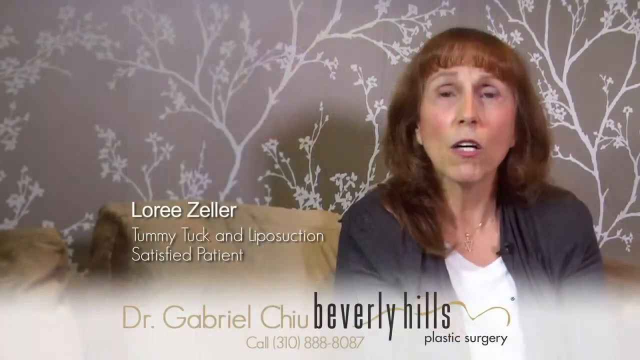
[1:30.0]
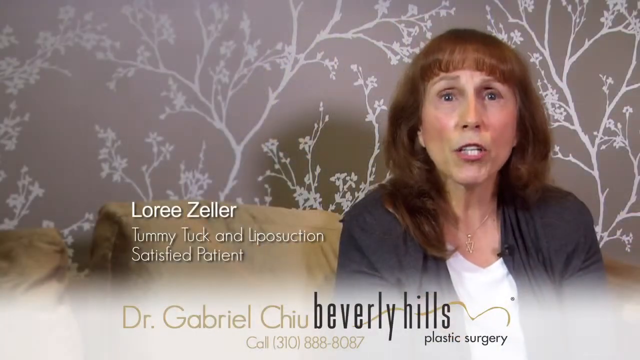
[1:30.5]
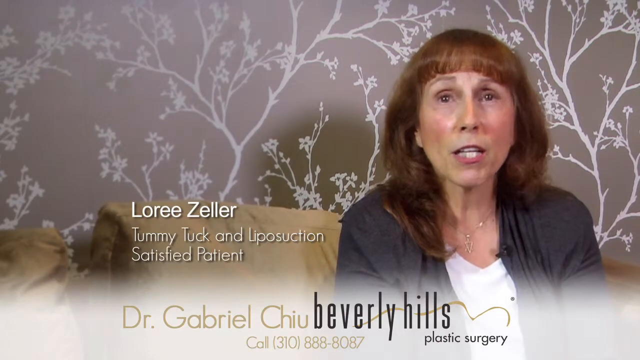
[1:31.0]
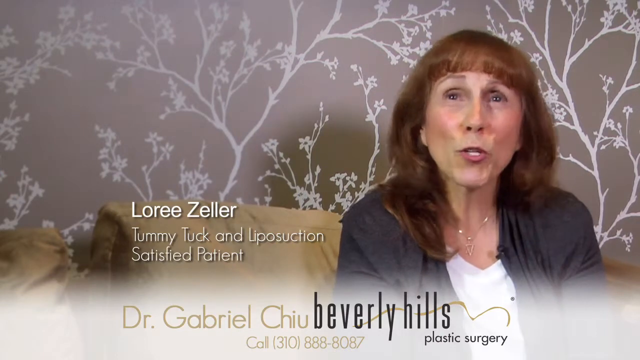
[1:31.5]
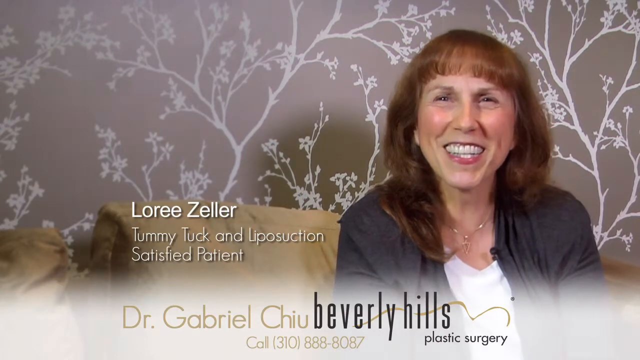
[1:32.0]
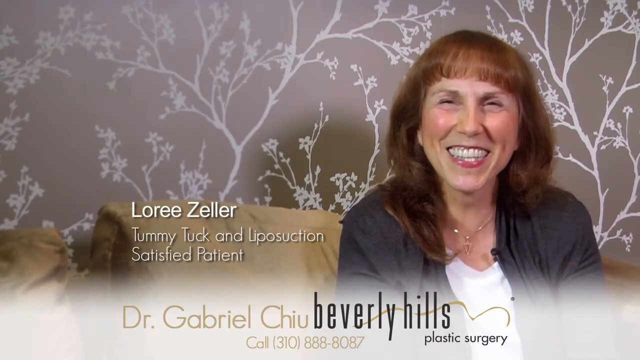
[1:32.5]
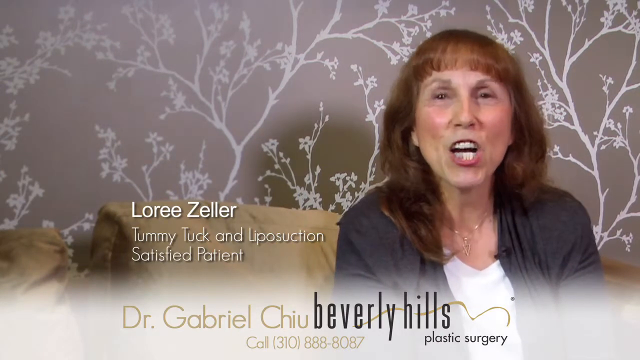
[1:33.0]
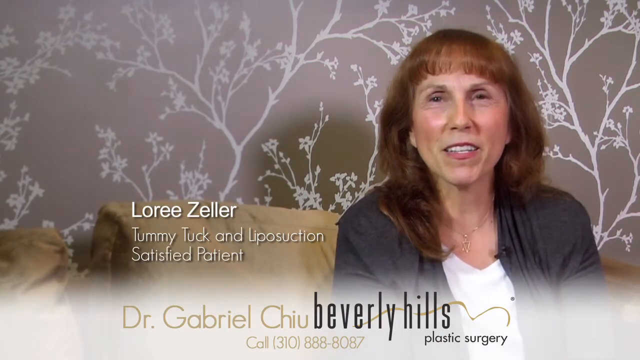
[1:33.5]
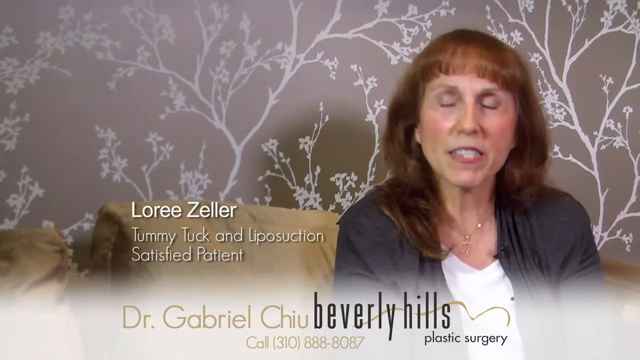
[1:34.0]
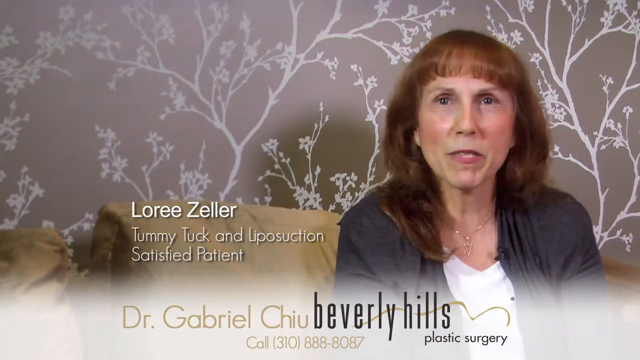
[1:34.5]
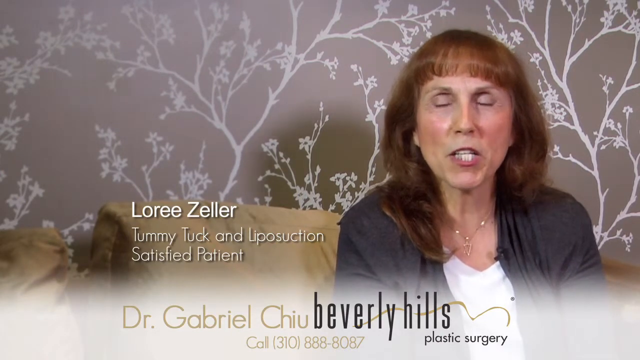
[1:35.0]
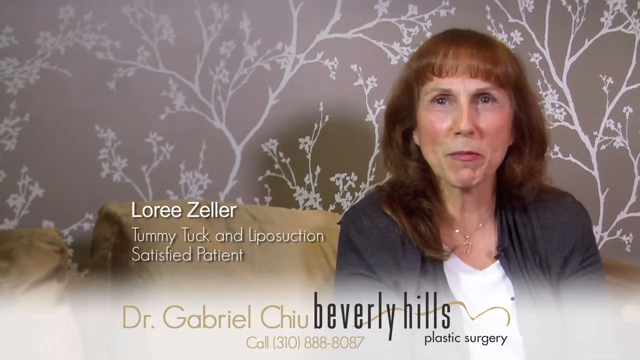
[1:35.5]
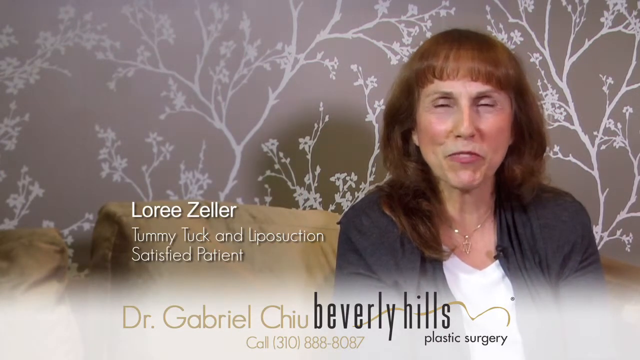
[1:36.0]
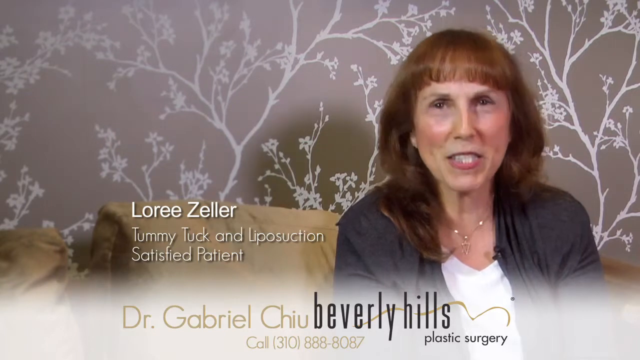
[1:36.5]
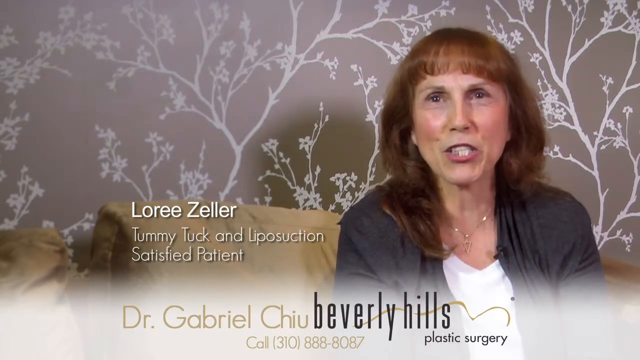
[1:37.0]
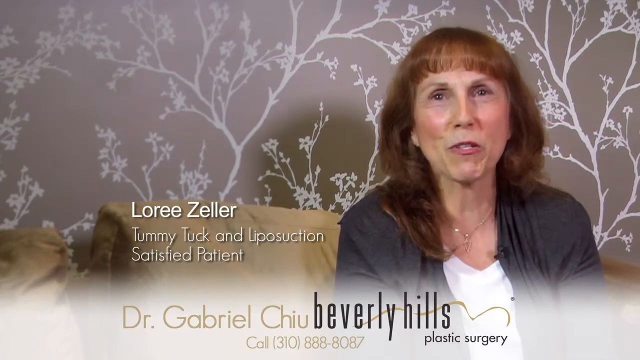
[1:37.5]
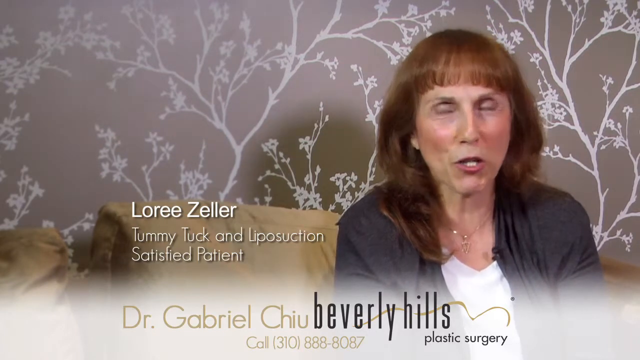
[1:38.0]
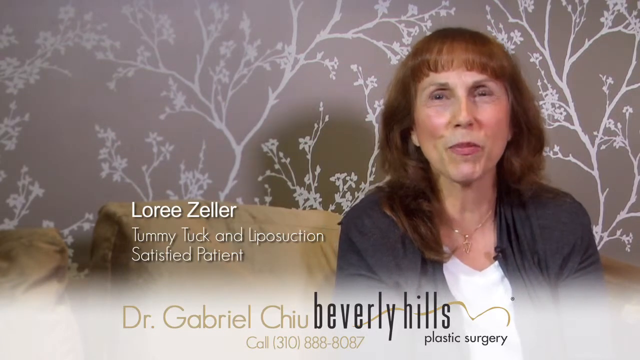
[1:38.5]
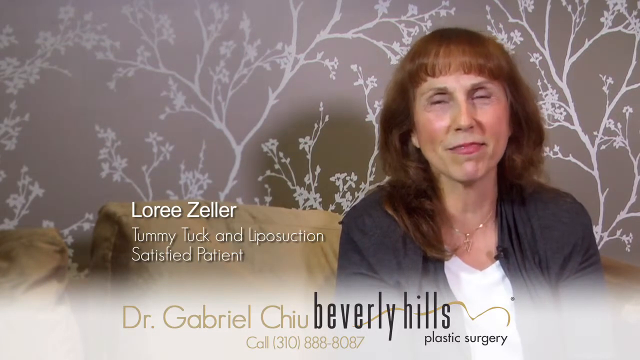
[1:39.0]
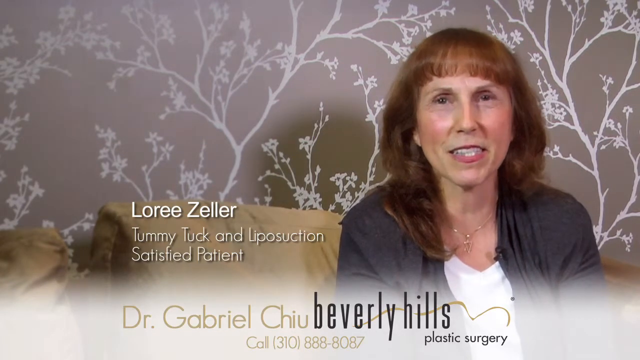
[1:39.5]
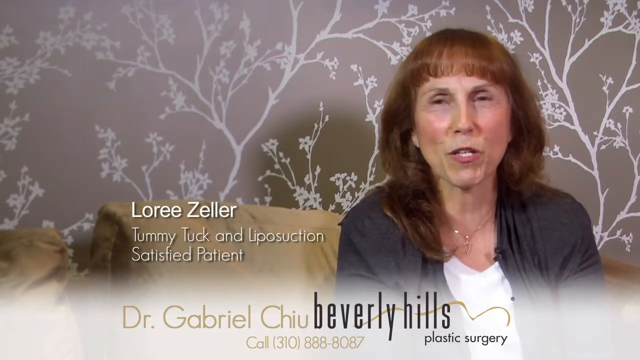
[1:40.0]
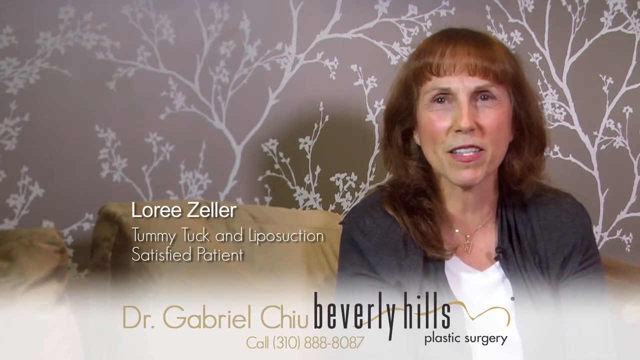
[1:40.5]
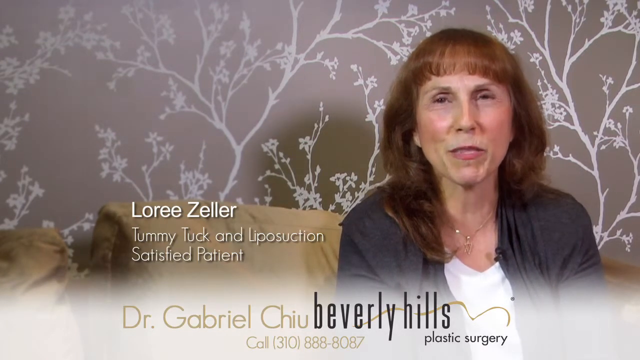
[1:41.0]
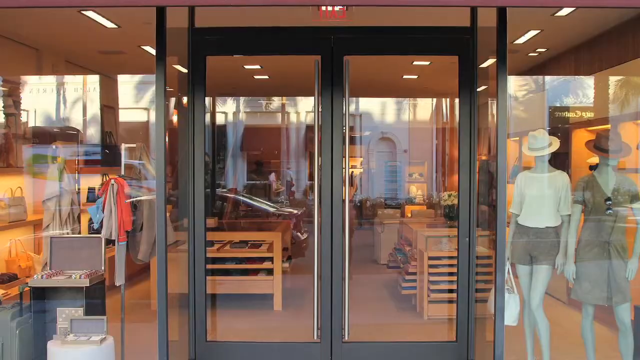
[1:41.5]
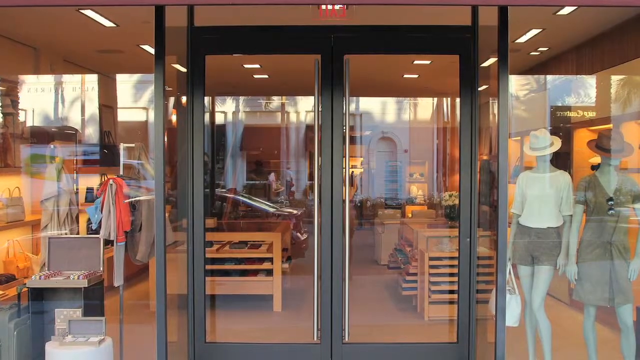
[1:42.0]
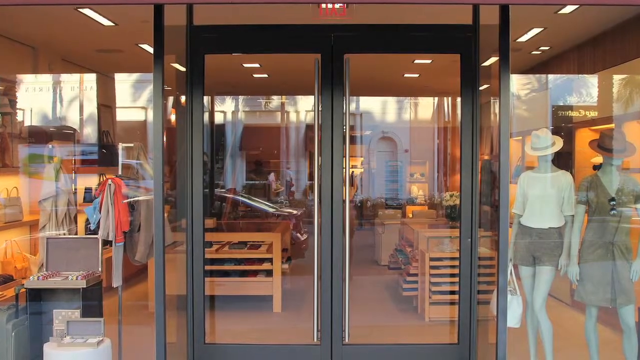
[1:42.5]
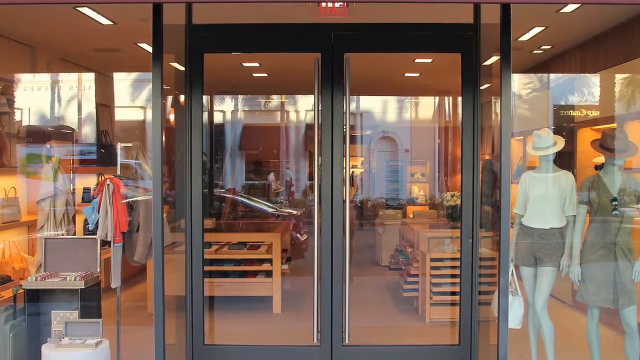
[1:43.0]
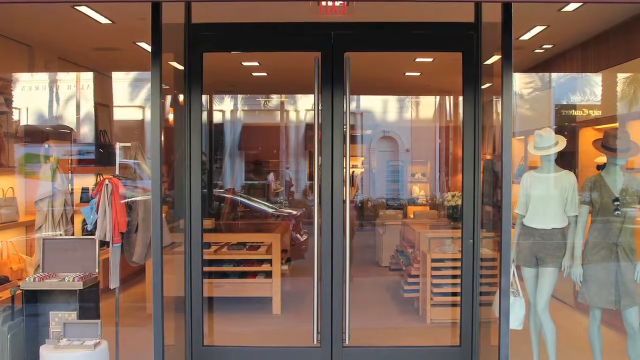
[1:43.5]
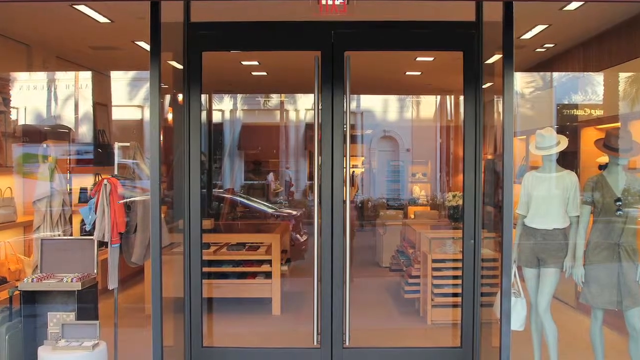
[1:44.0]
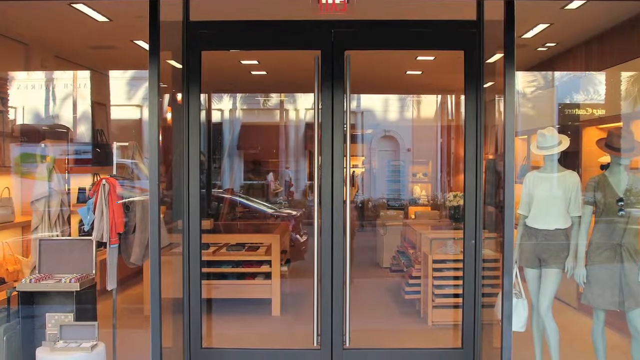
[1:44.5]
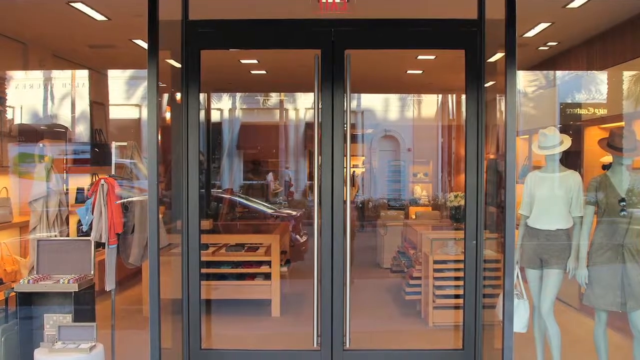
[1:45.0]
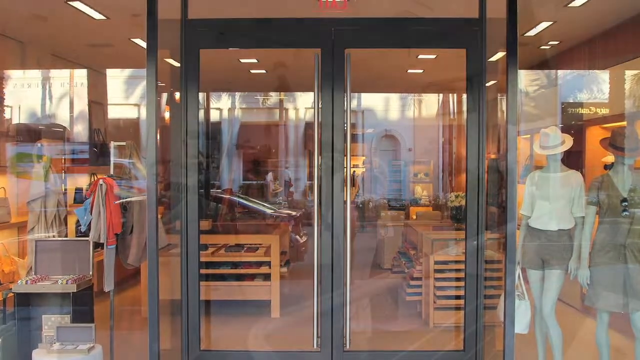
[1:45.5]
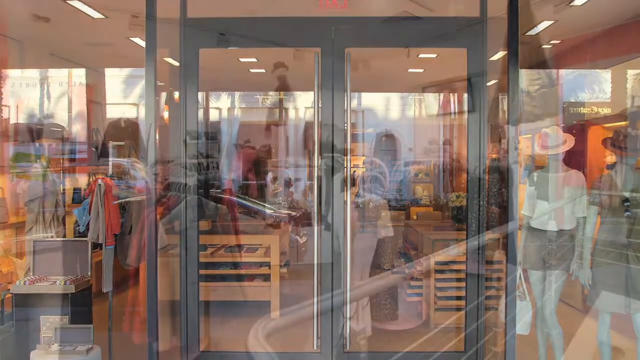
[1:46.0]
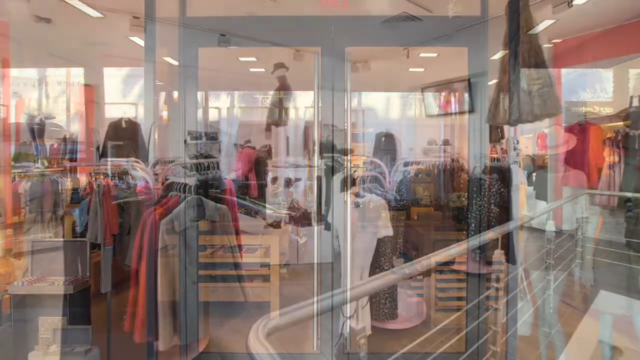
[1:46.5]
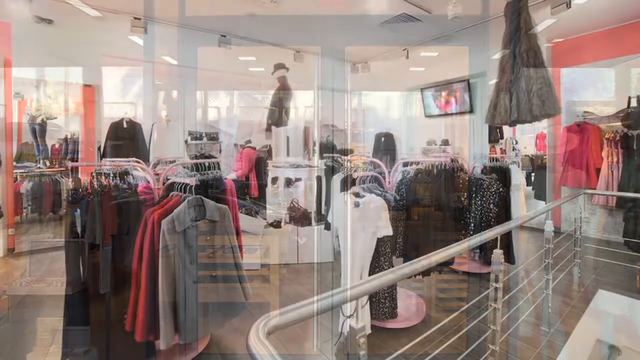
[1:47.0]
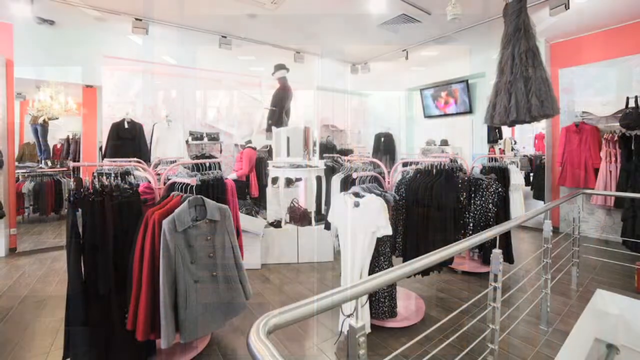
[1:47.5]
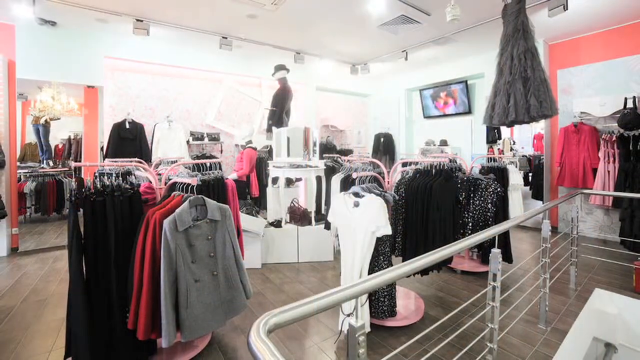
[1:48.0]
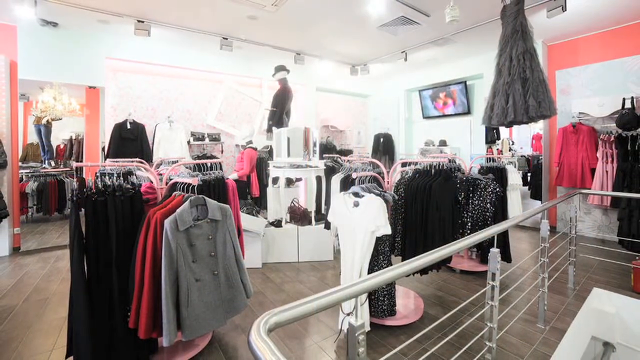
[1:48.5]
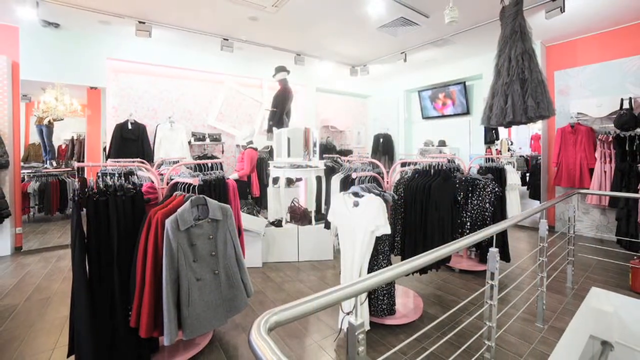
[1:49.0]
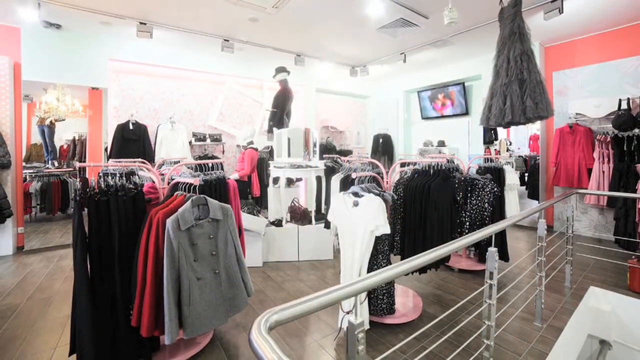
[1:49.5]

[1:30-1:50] Lori Zeller continues her interview, smiling broadly at the camera. The video cuts to what seems to be a storefront with clothes, items and shelves; it looks like an upmarket, perhaps independent, clothes and accessories store, with a closed glass door. Next is an image, presumably of the same shop's interior, with lots of clothing on rails that looks neatly organized; the shop seems to specialize in women's clothing, though this is not certain. Three mannequins displaying clothes are visible in the photo.